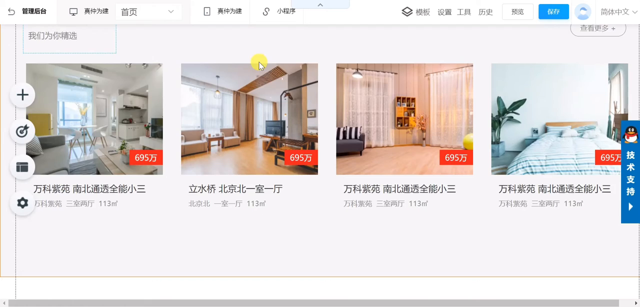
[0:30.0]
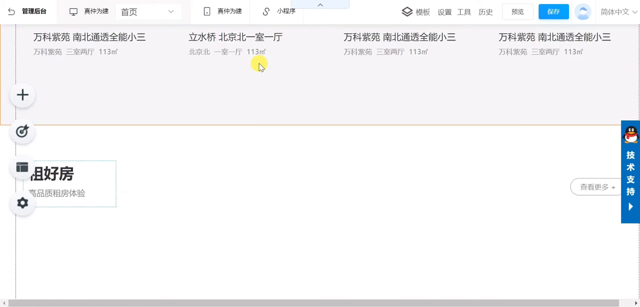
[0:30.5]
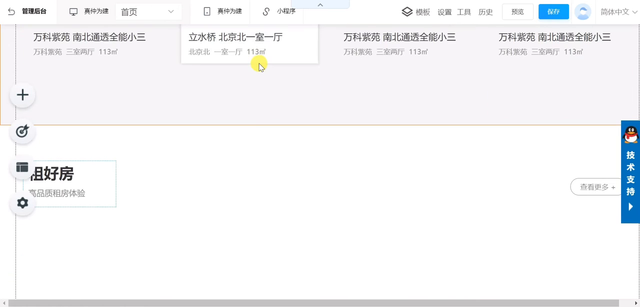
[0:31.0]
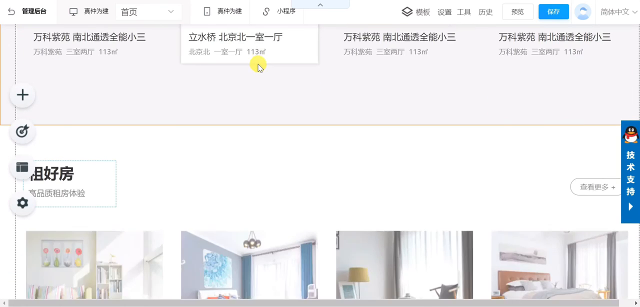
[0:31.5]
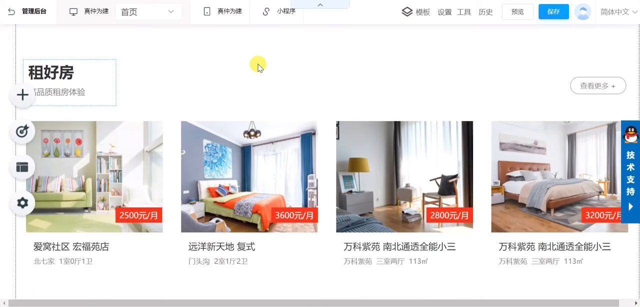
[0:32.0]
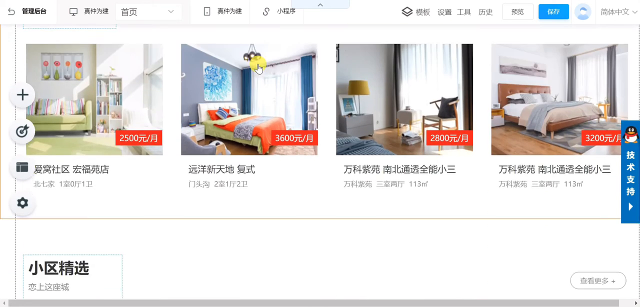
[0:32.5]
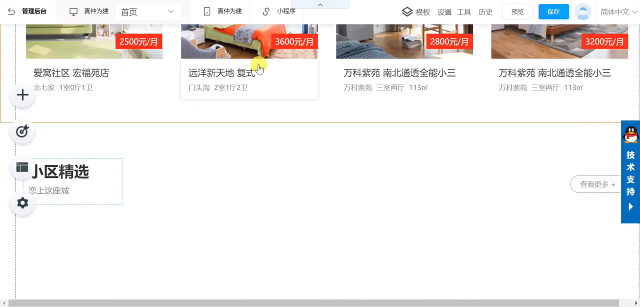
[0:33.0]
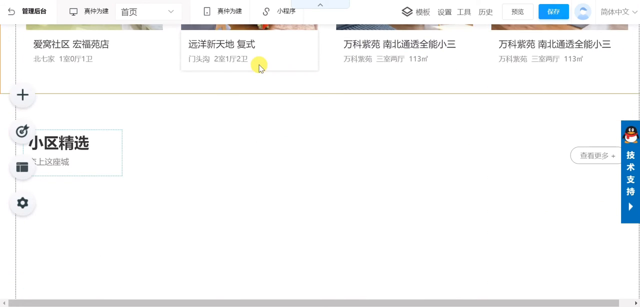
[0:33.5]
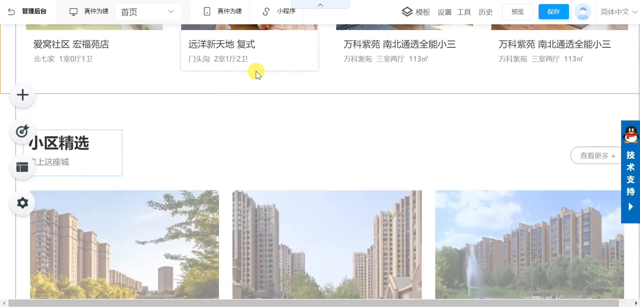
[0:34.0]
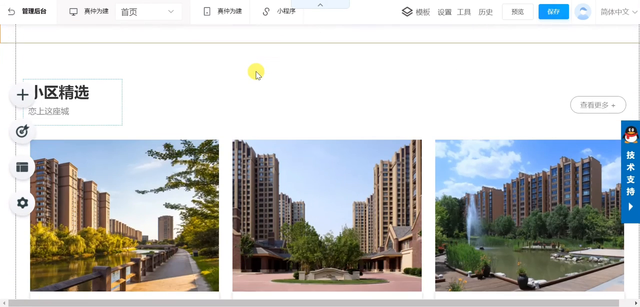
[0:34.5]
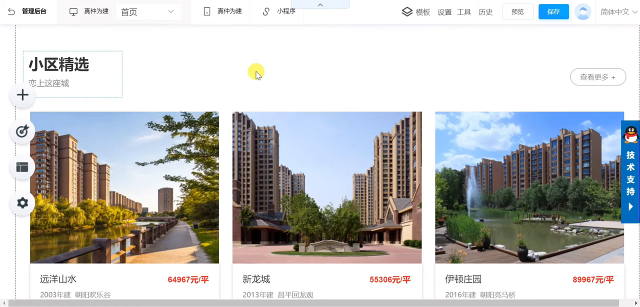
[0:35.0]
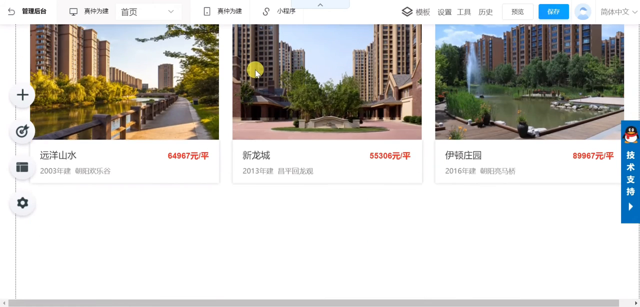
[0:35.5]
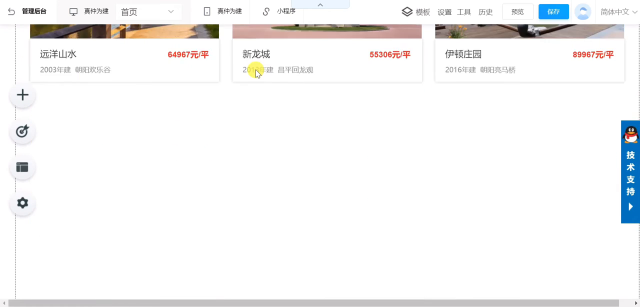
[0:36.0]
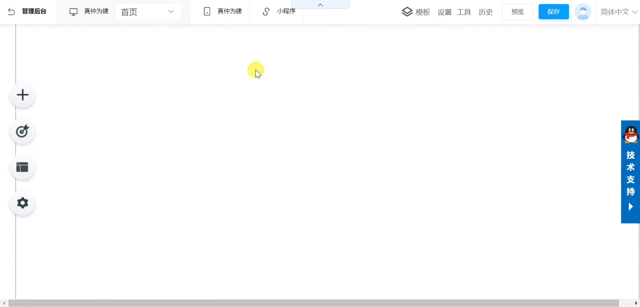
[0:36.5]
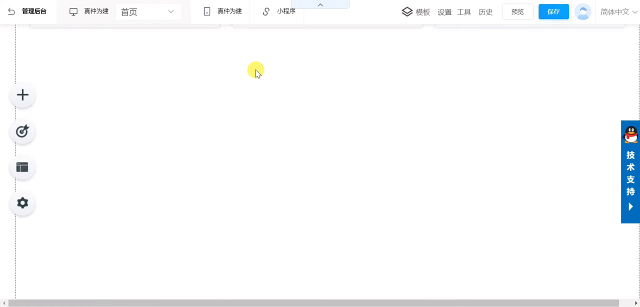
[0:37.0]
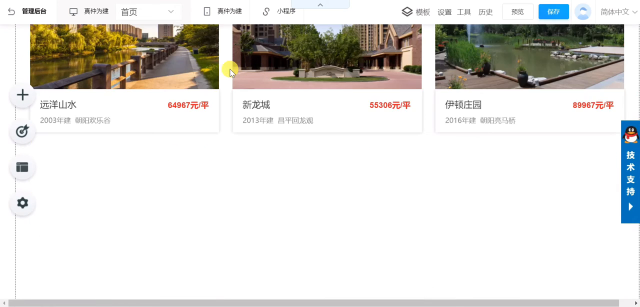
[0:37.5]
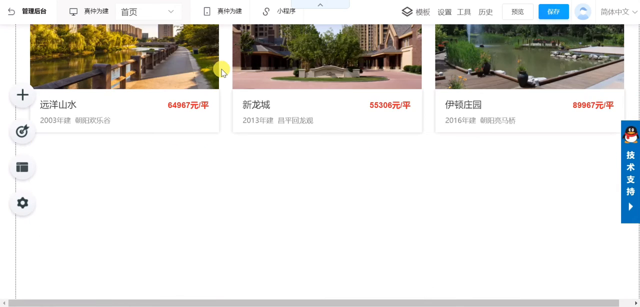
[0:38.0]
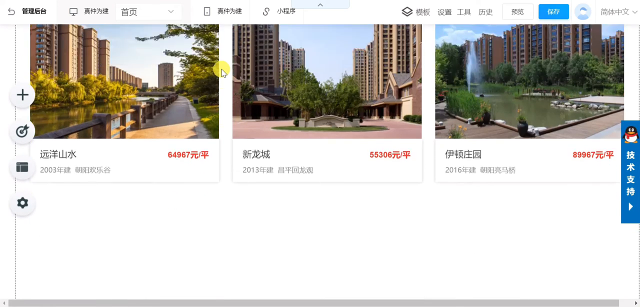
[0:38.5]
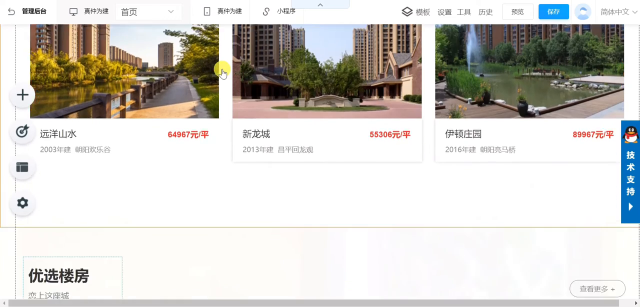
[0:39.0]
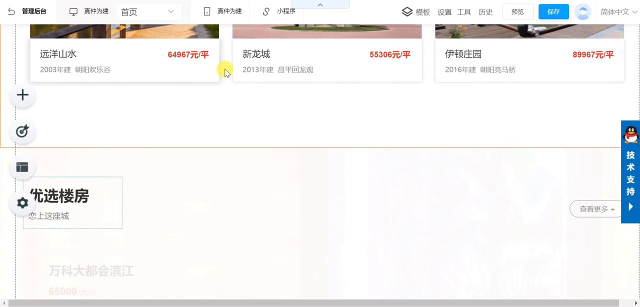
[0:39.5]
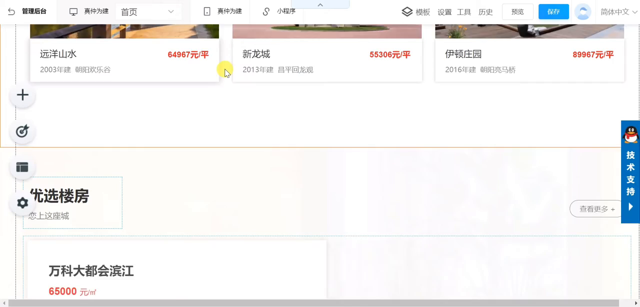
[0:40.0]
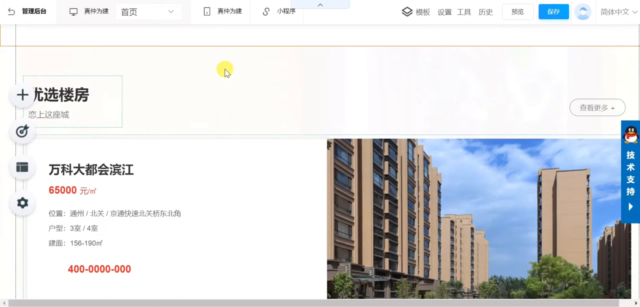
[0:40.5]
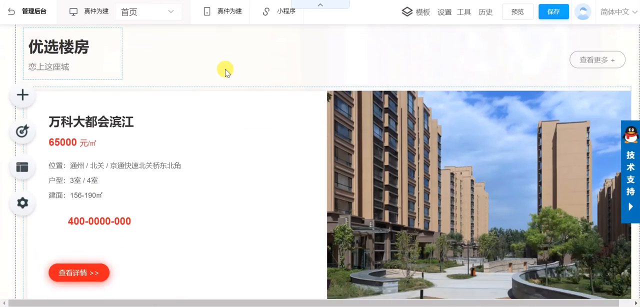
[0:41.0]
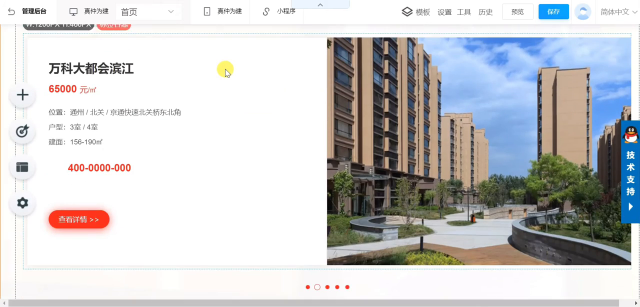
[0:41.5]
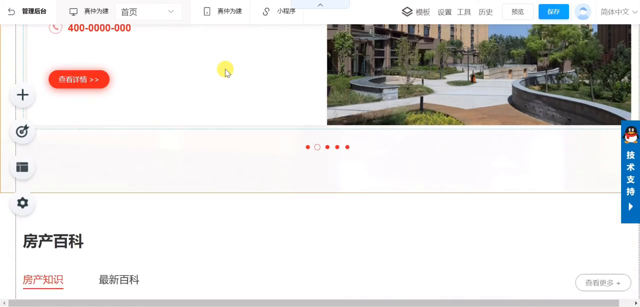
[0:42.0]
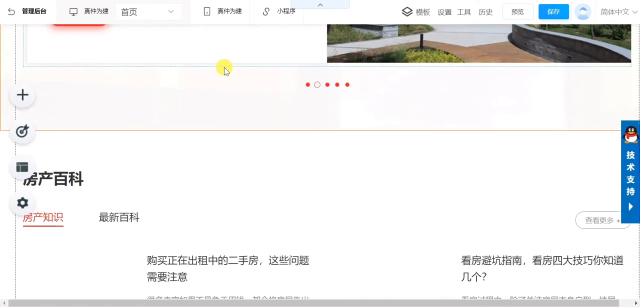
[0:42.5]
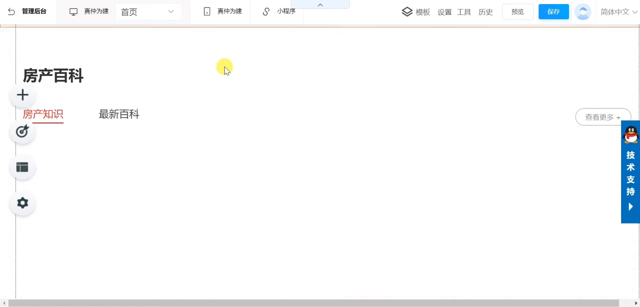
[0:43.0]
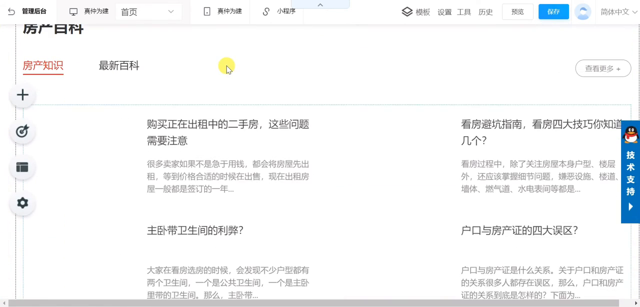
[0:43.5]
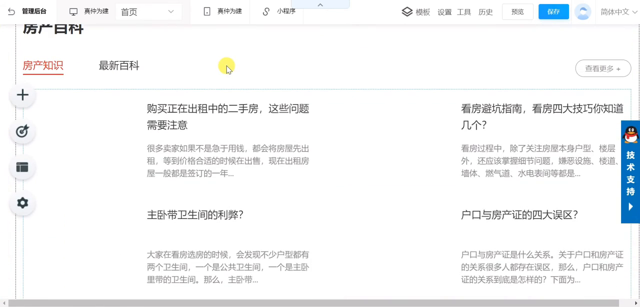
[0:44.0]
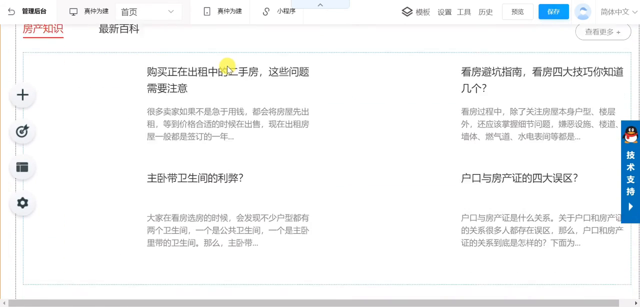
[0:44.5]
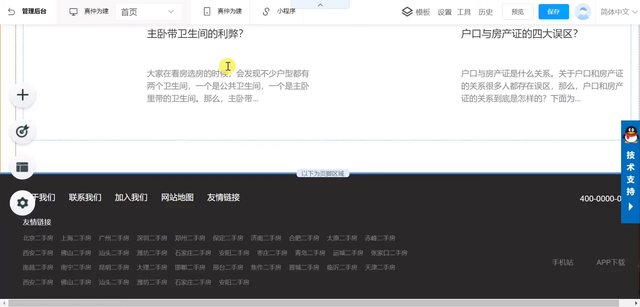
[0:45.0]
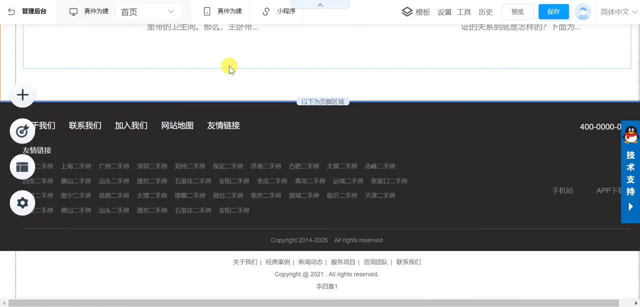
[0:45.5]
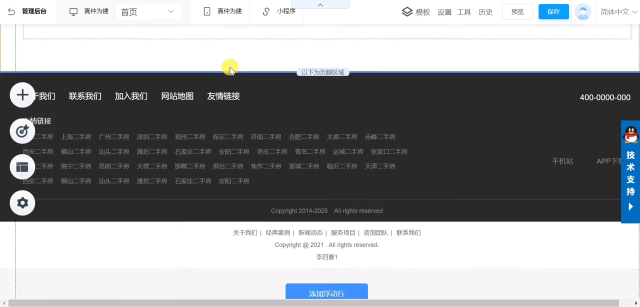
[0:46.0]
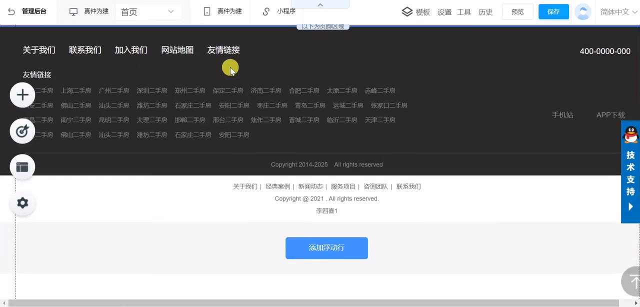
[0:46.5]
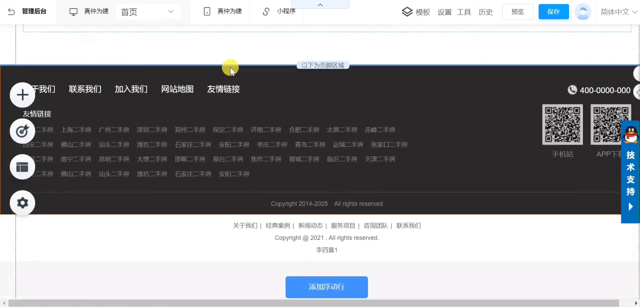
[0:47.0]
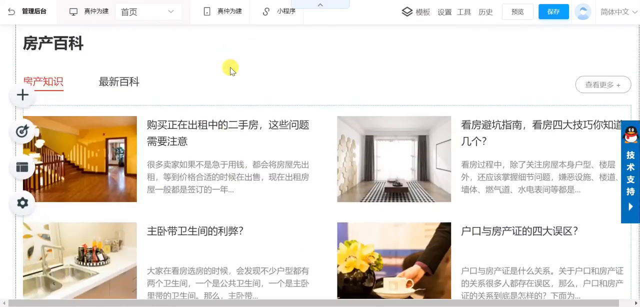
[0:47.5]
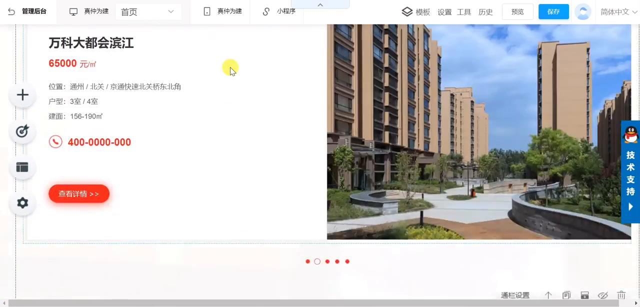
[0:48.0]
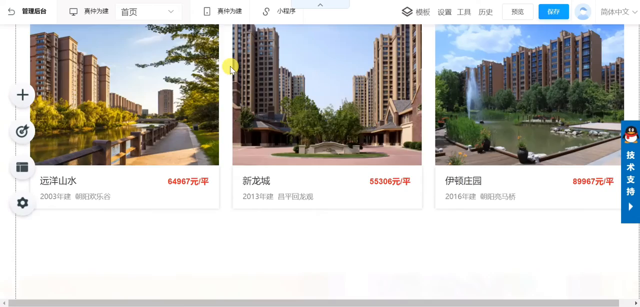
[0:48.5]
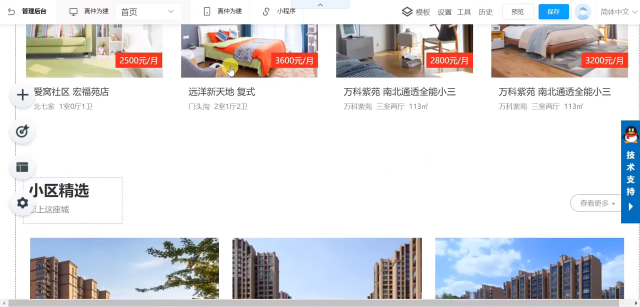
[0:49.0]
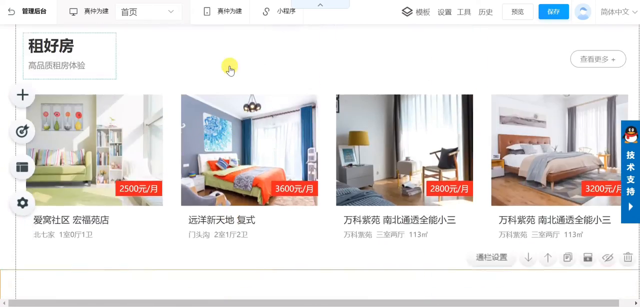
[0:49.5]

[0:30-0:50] A portion of the website shows what looks like example real estate listings. Each listing is an individual square with a price, and underneath is information on the size of the featured apartments in meters. The photos all show a broad view of a room, as though taken from a corner to capture as much of the room as possible. Along the sides are icons for different toolbars and pulldowns. On the right-hand side there is an icon of a penguin with a line of text on a blue bar that can be pulled in and out on the screen. On the left-hand side there is a gear logo, a website screen logo, a bullseye target logo and a plus symbol, apparently forming a side menu bar. At the top are the demo screen login and the different versions of the website that can be viewed, such as desktop, mobile and other condensed versions, along with other account items and options in Asian characters that cannot quite be made out. The cursor continues scrolling down the website to a portion showing a different type of residential listing, making clear this is a WordPress demo site for real estate agents.